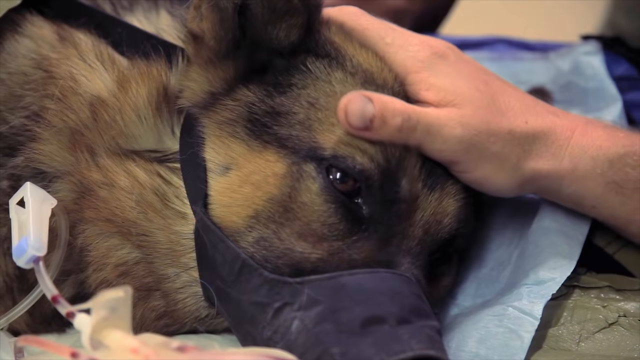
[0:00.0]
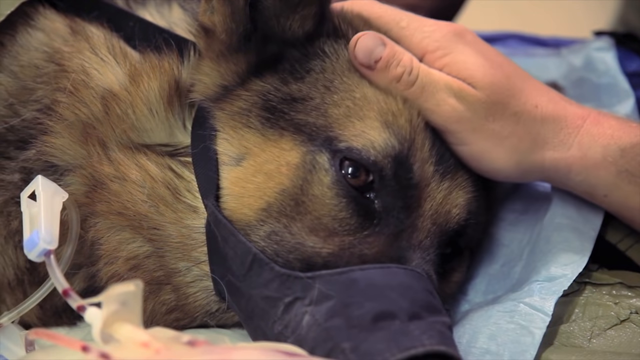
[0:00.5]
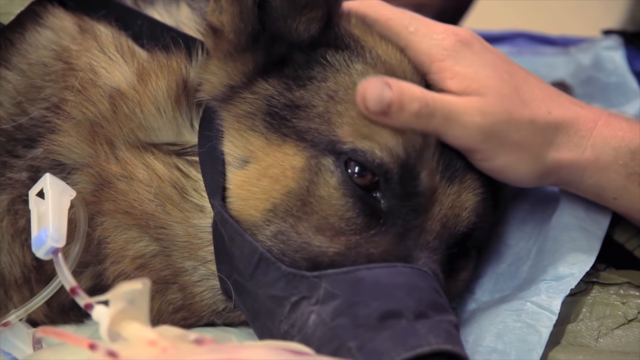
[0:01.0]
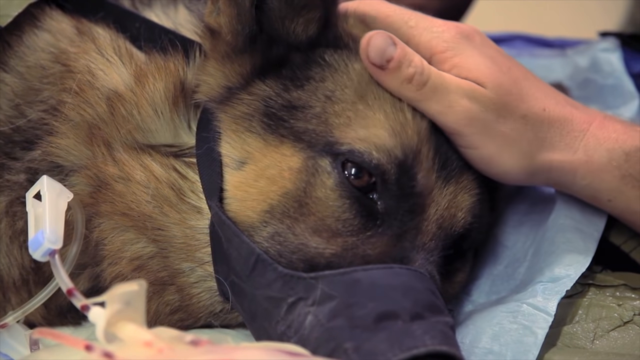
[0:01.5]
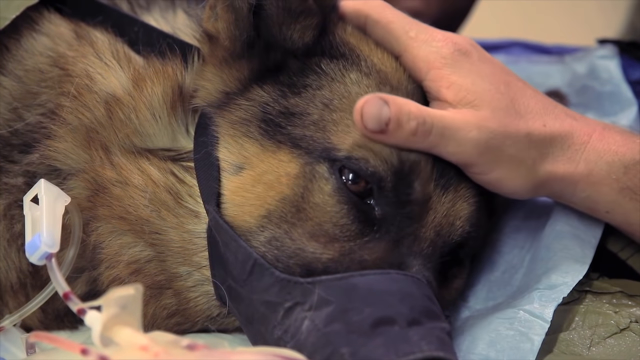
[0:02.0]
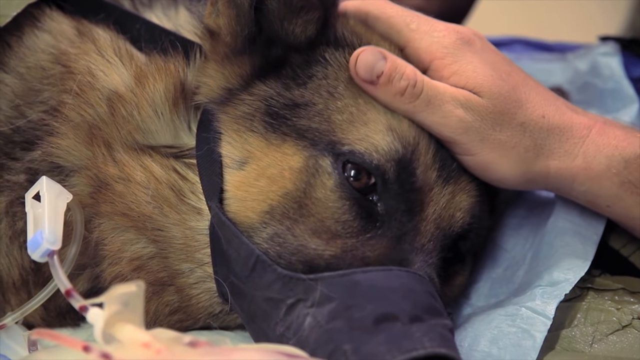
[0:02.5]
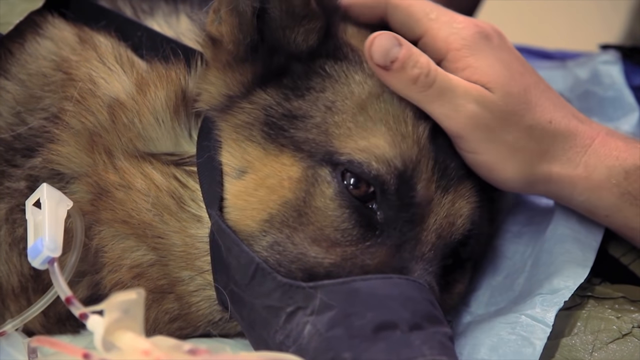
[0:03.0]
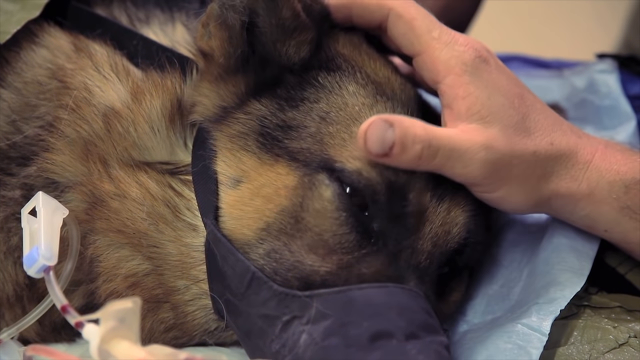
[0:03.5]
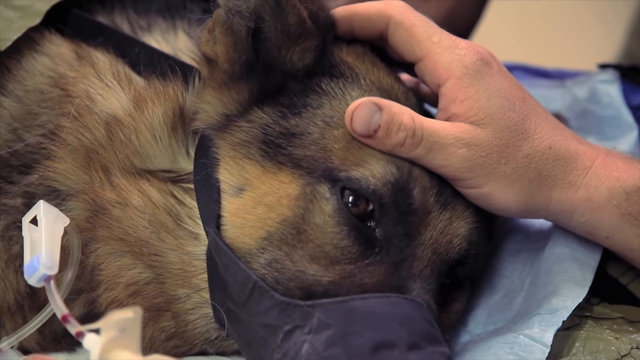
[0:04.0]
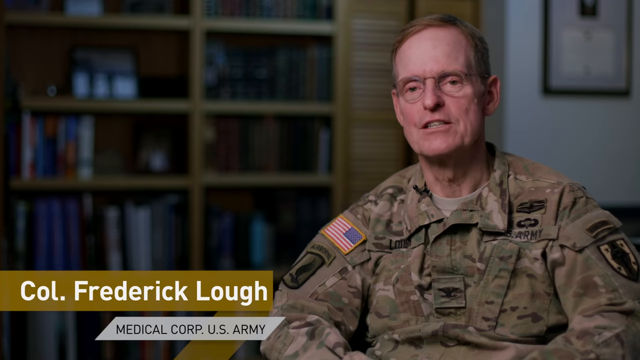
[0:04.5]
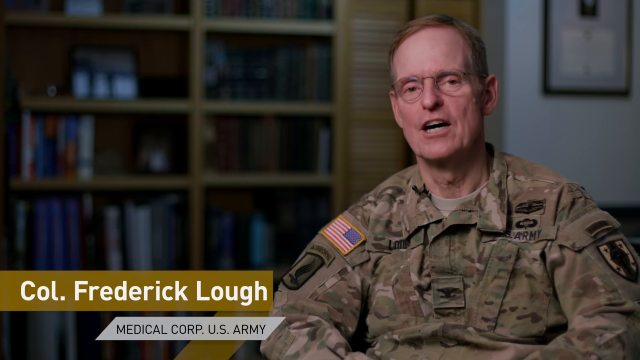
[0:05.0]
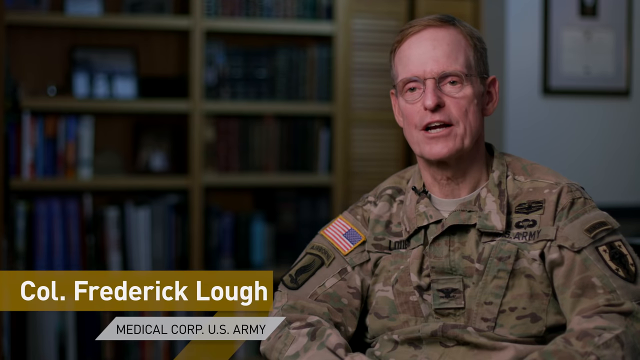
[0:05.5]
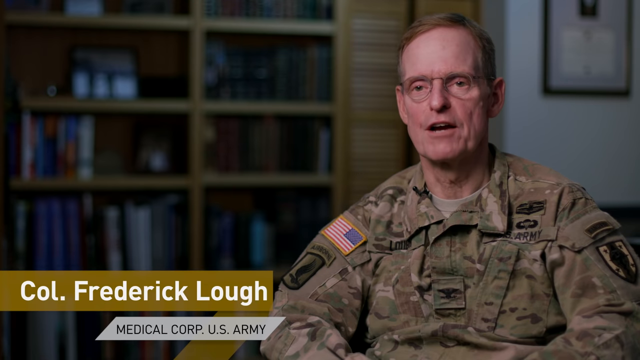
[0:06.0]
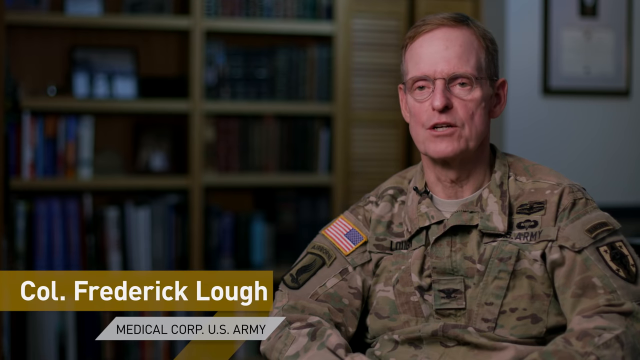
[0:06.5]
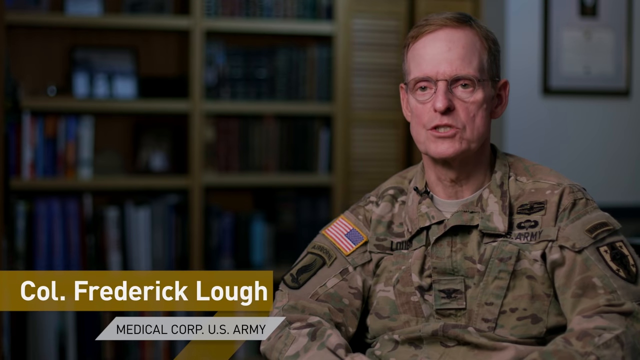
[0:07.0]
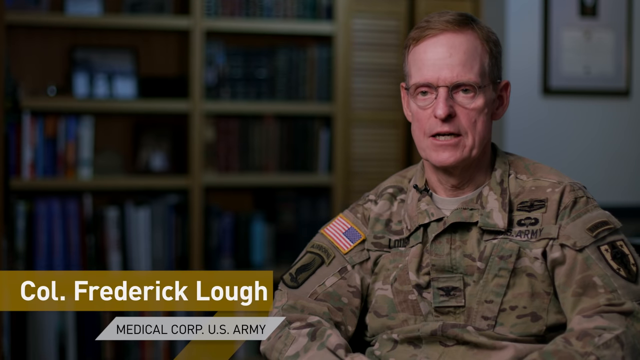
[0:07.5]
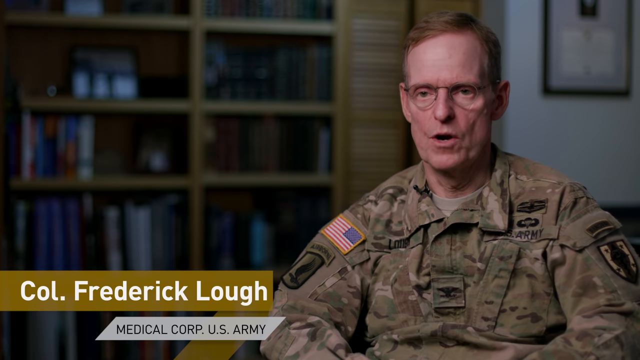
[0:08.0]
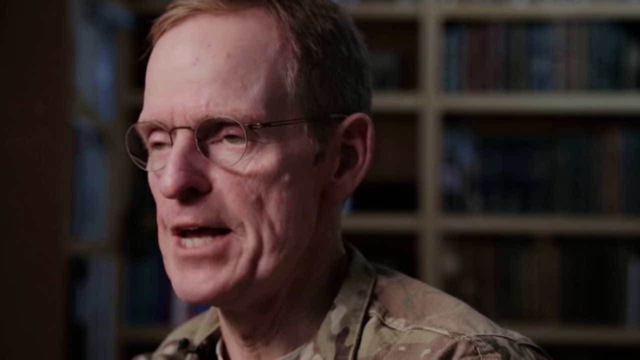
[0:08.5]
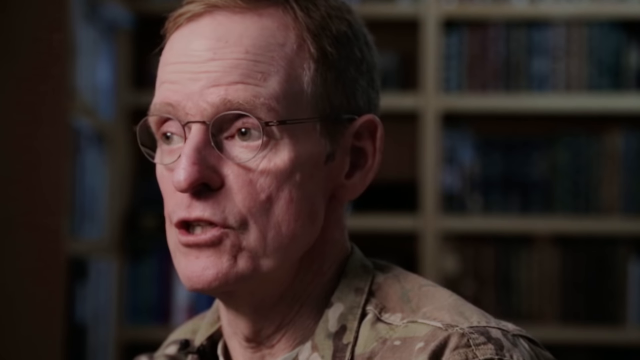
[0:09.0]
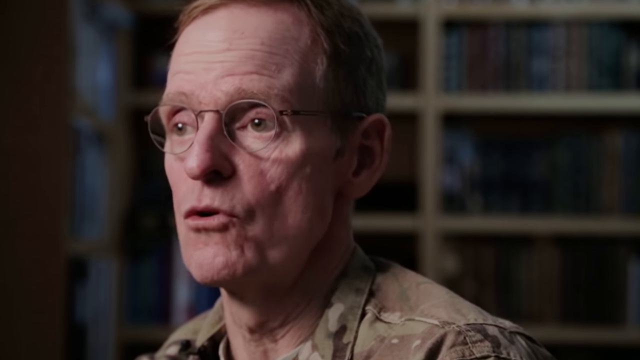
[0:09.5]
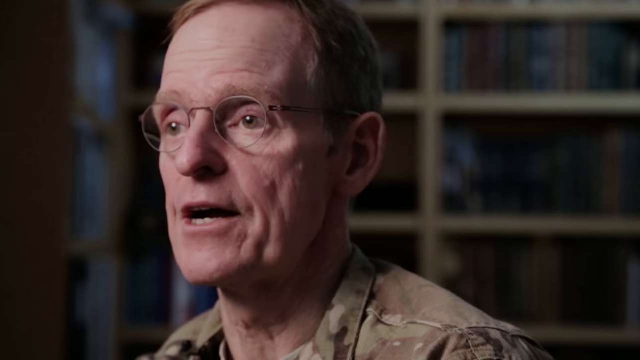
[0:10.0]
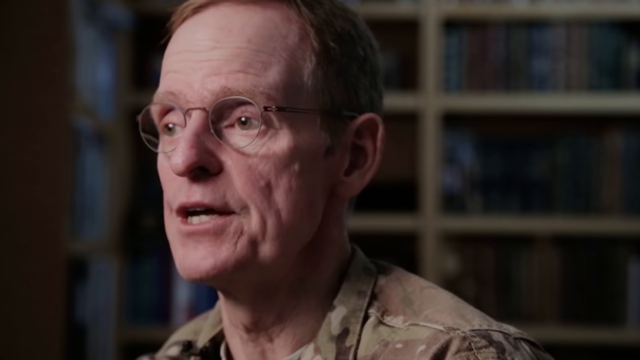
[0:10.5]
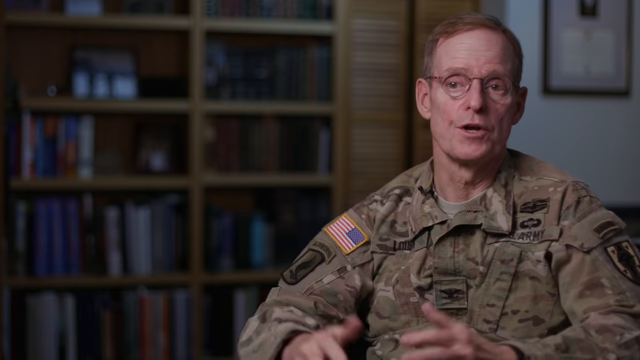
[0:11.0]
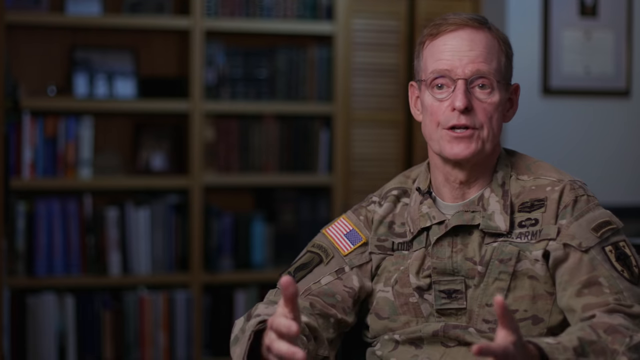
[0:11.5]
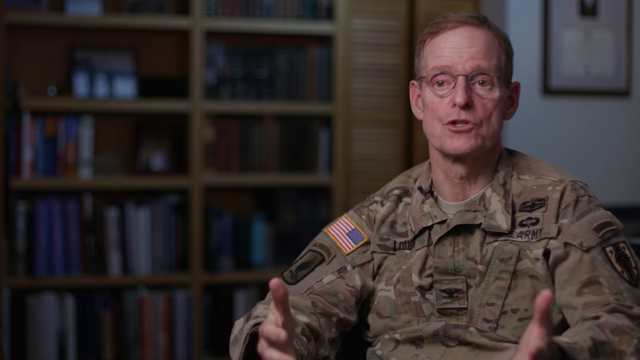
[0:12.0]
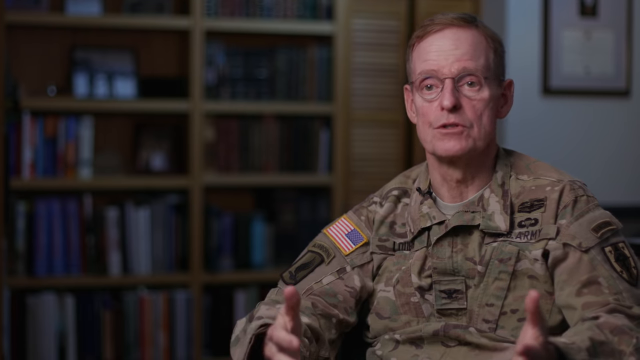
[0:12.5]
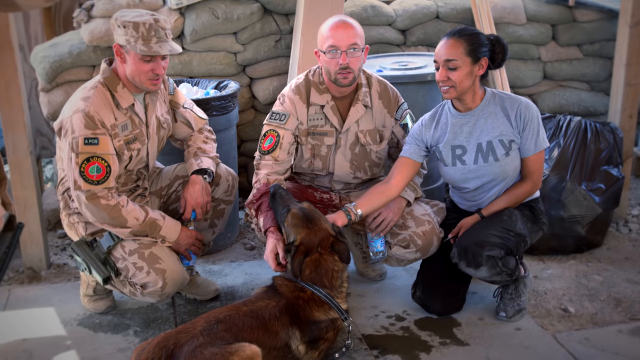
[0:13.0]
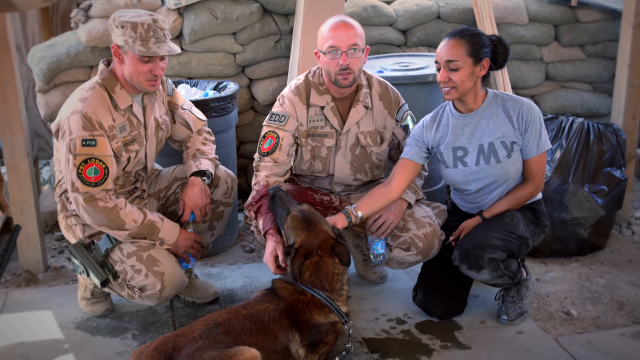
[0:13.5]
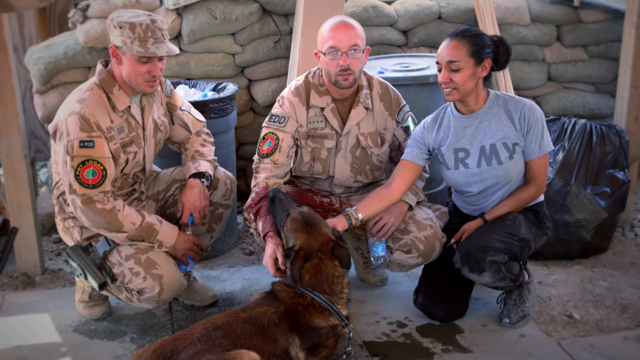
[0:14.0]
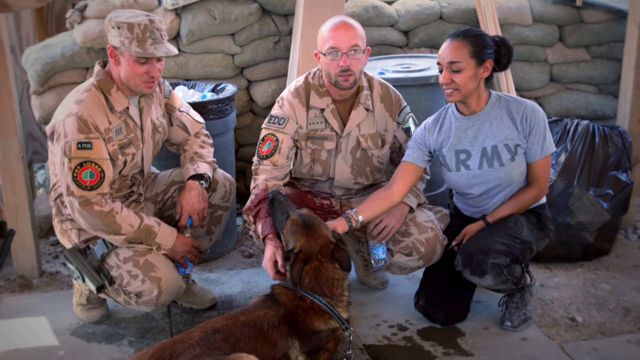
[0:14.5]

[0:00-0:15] A close-up shows the head of a German Shepherd lying on its side. It has a muzzle on and appears to be hooked up to an IV. A human hand gently pets the dog's head. It appears as though the dog is about to go into surgery. The camera pans away from the dog to show a white man in a military uniform with glasses; text identifies him as "Colonel Frederick Lau, an Army medic." He talks, and then another shot shows the same German Shepherd with three other military personnel surrounding and petting him.